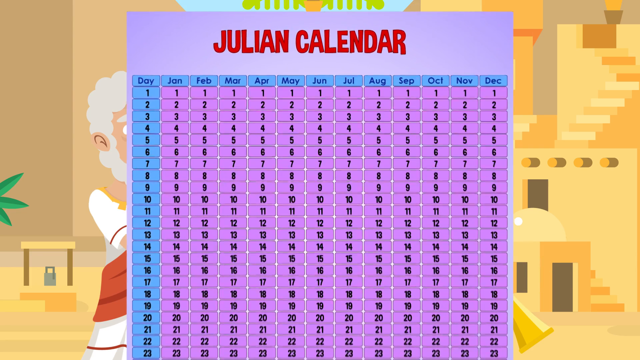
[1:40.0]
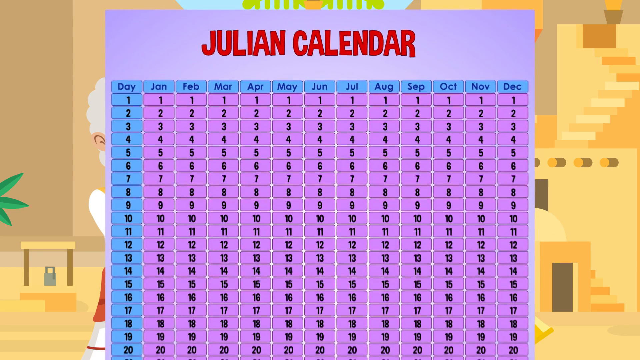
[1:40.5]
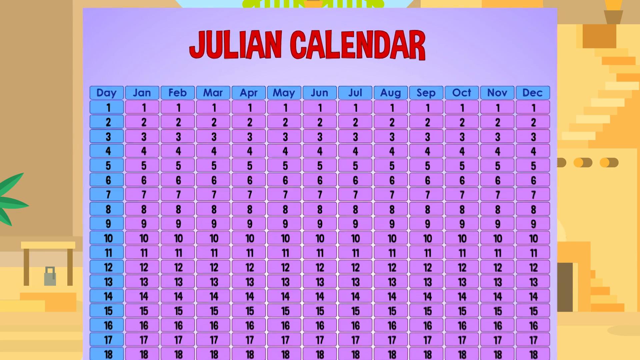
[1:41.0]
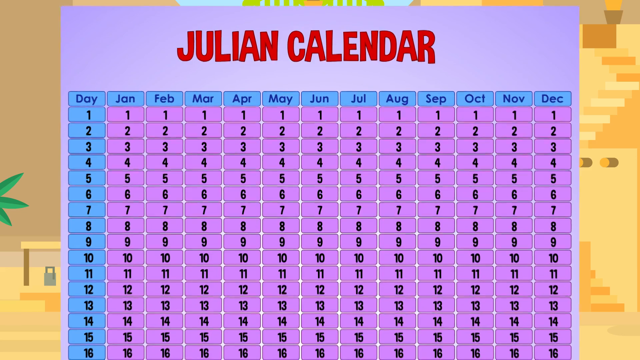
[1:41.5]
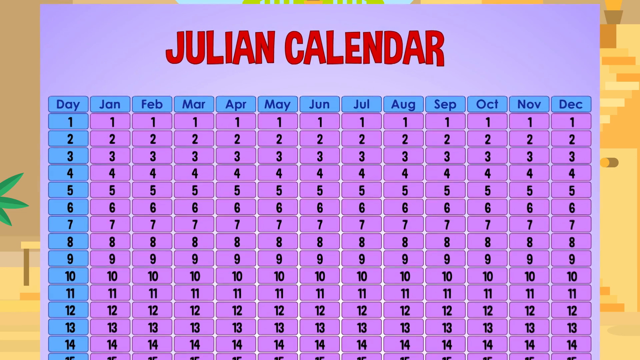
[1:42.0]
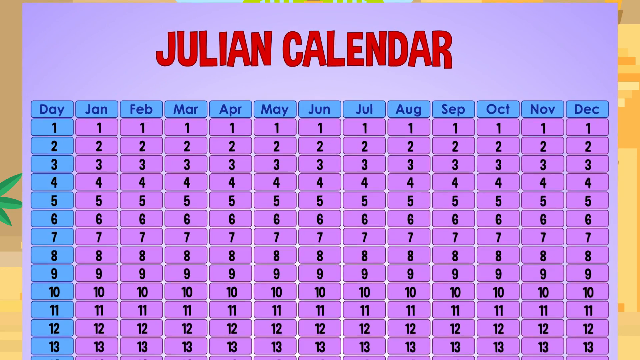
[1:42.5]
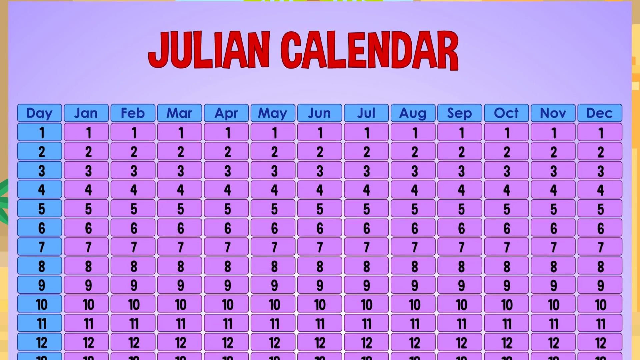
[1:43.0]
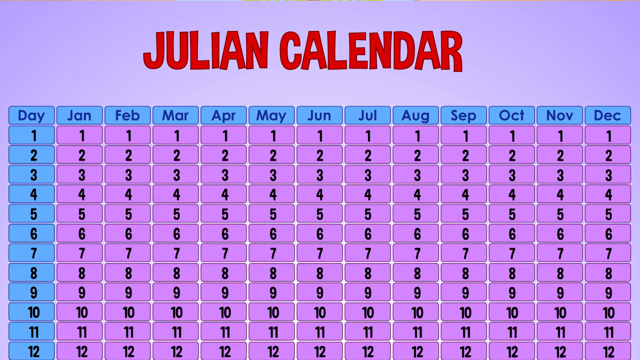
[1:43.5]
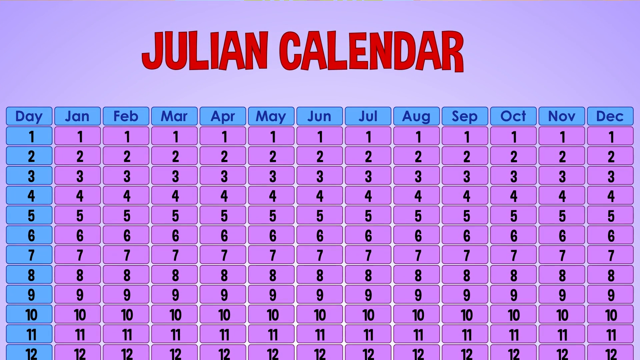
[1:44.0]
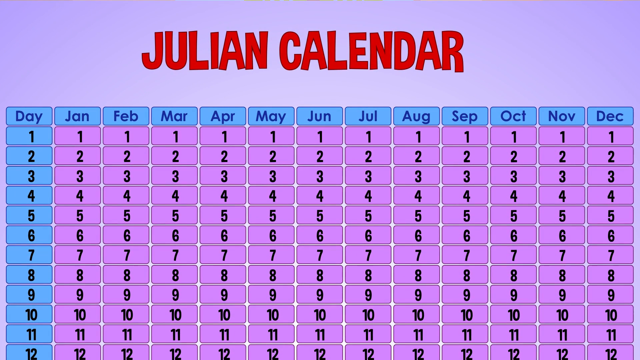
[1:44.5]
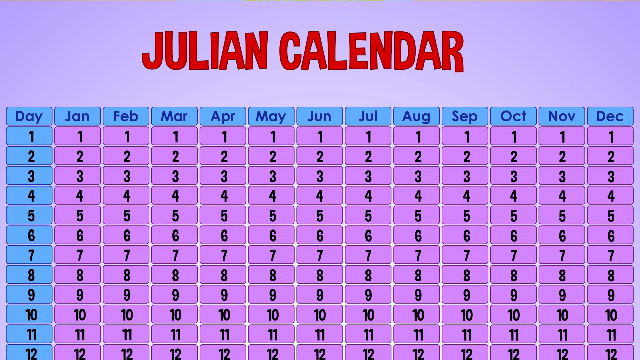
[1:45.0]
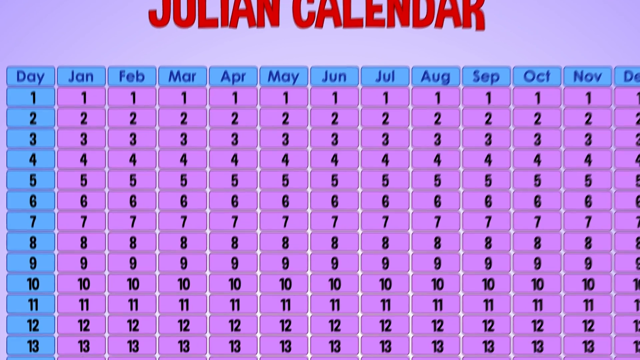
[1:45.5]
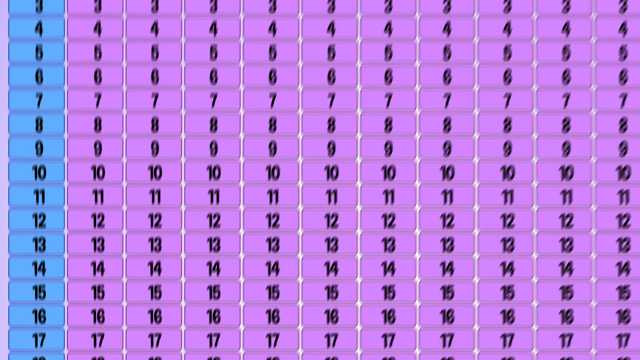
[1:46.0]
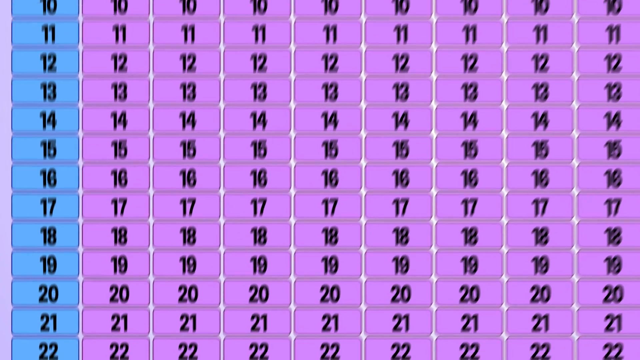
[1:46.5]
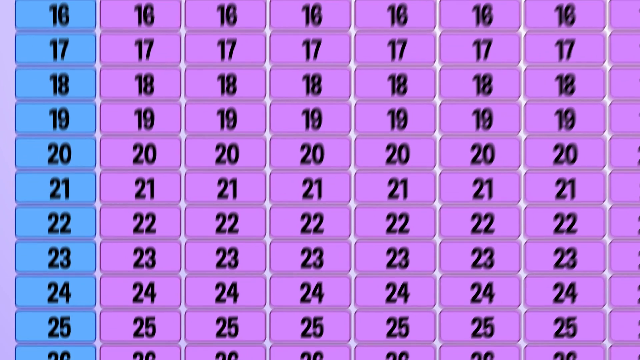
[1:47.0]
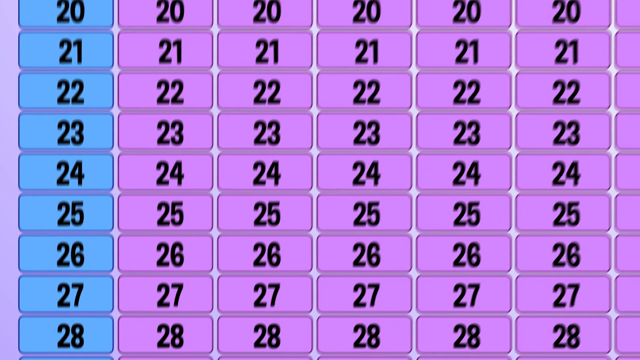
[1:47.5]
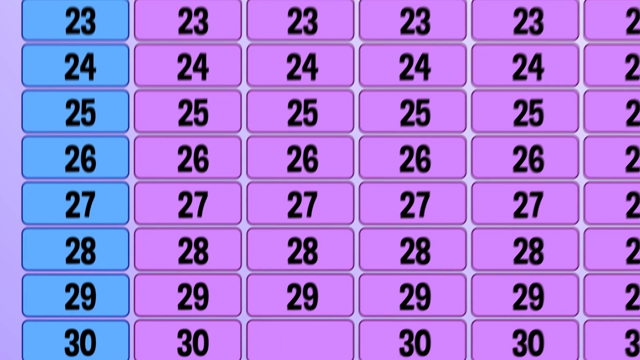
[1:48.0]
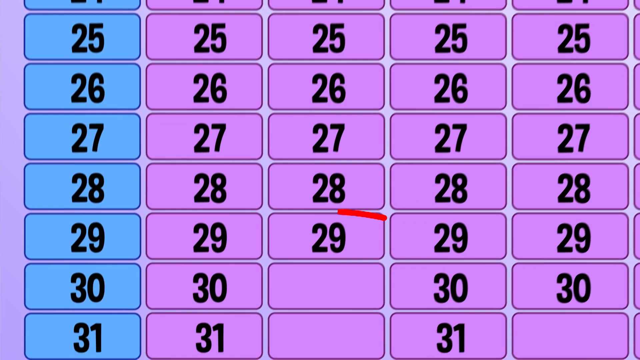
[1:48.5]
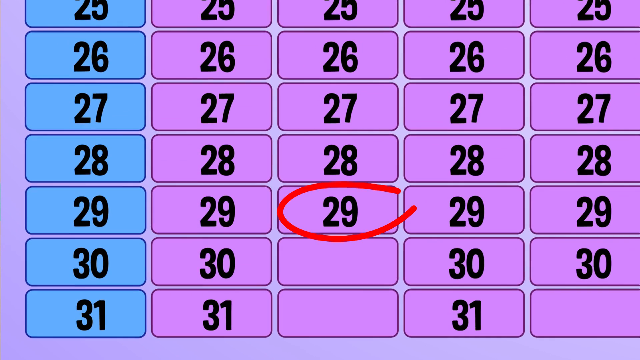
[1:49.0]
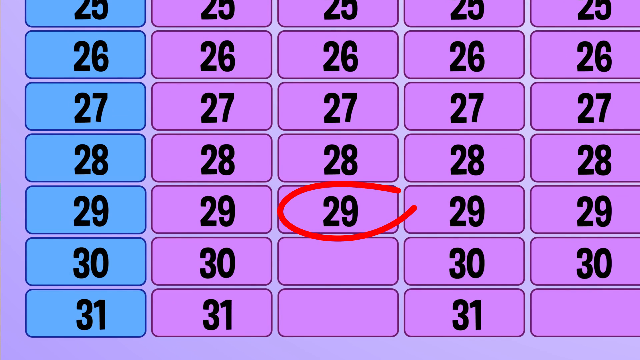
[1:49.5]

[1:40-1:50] The Julian calendar is shown, with a column of 31 days and columns for January, February, March, April, May, June, July, August, September, October, November and December, each with different numbers of days, starting with January, which has 31. The camera approaches and shows more closely the number of days in February, which is 29. The number 29 is then circled in red, with text below naming this day the leap day.